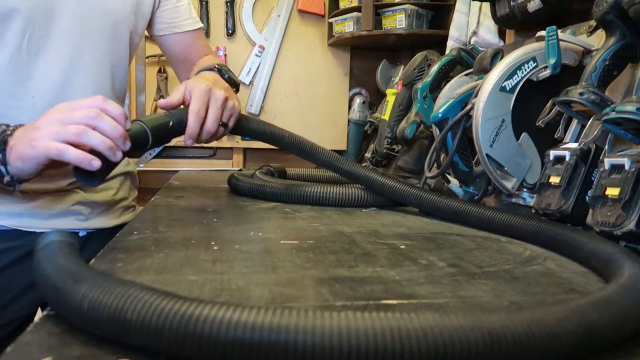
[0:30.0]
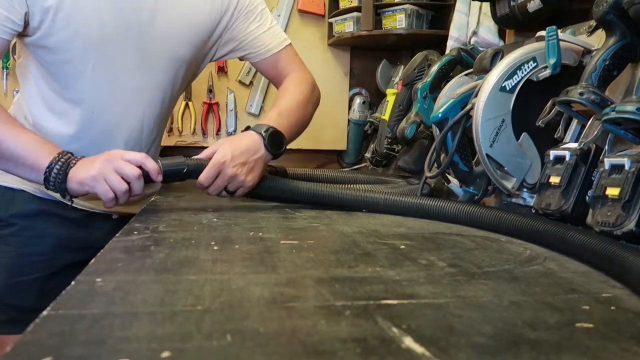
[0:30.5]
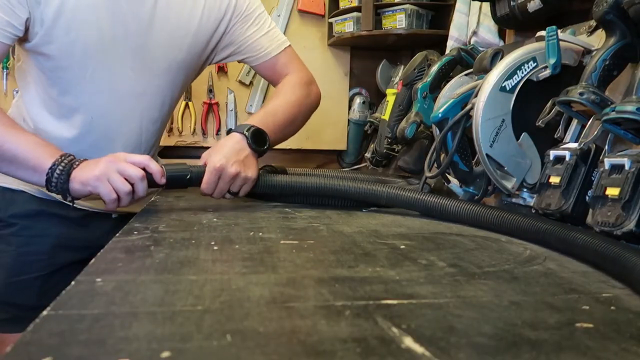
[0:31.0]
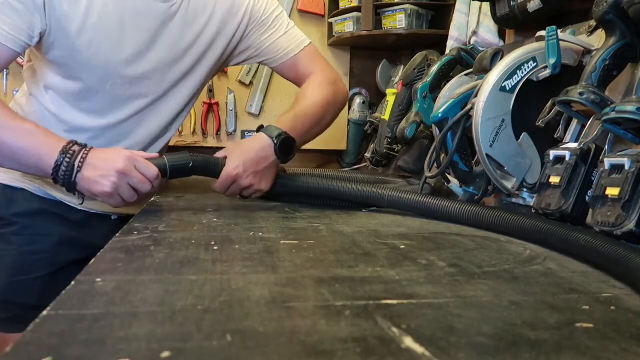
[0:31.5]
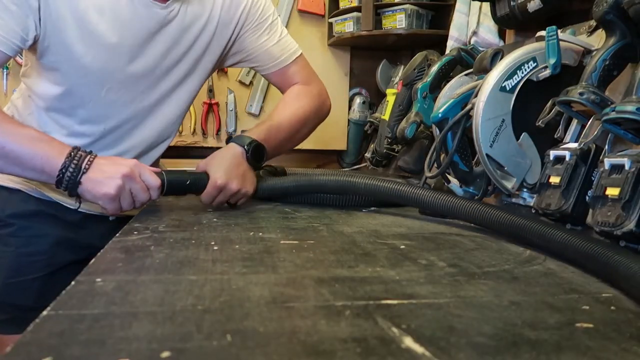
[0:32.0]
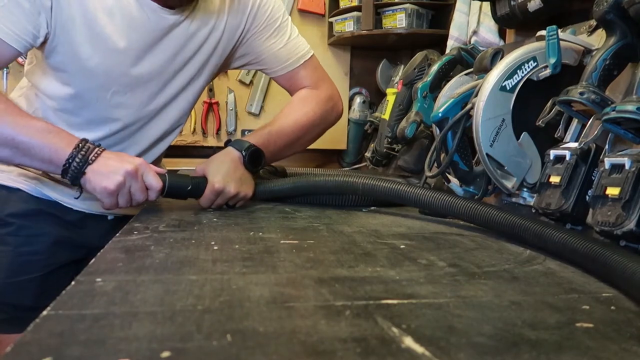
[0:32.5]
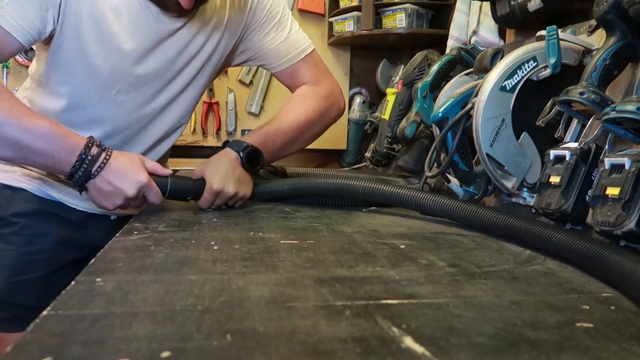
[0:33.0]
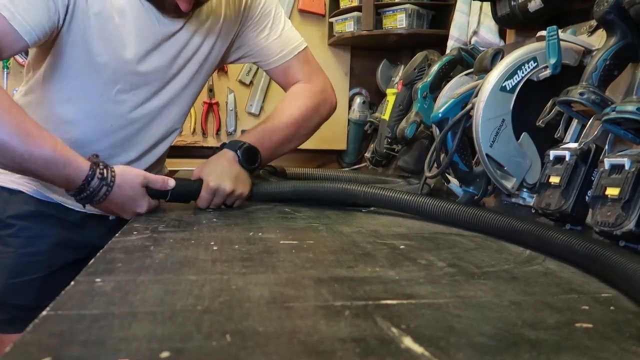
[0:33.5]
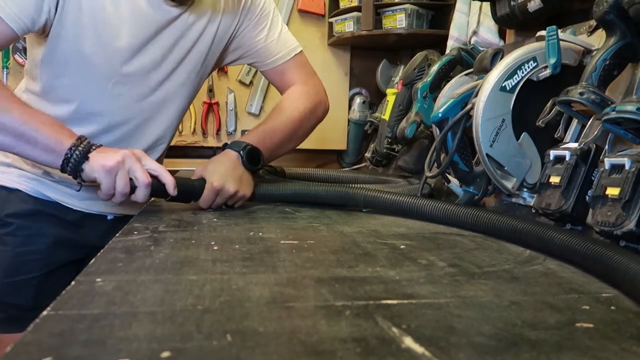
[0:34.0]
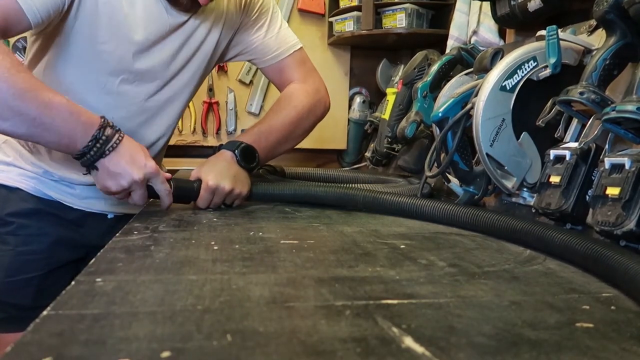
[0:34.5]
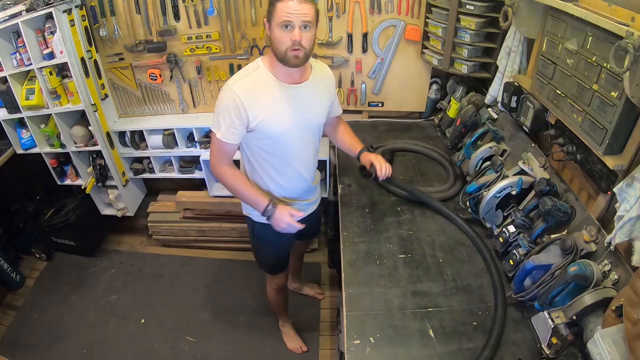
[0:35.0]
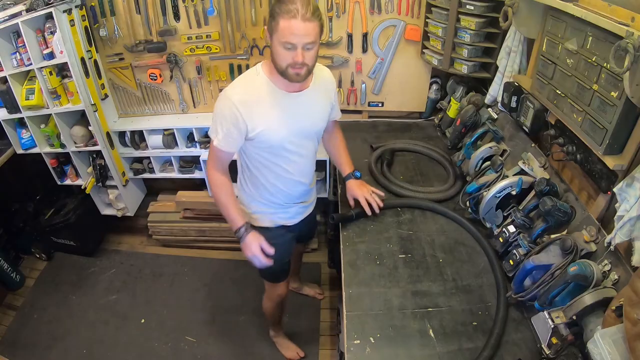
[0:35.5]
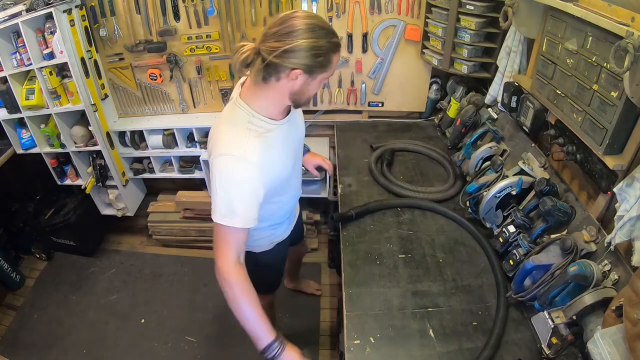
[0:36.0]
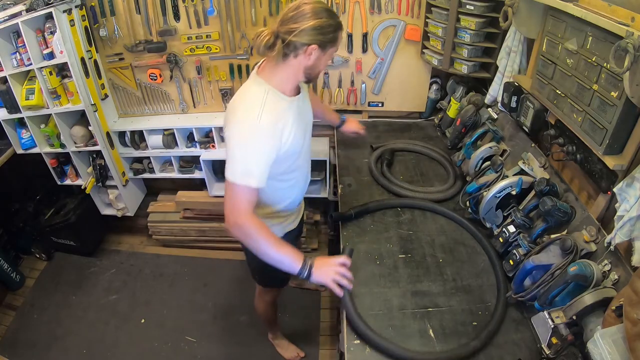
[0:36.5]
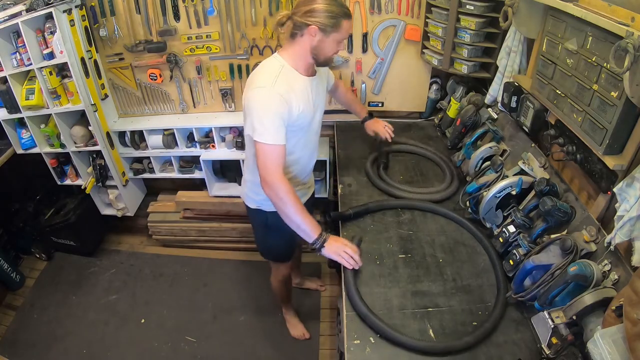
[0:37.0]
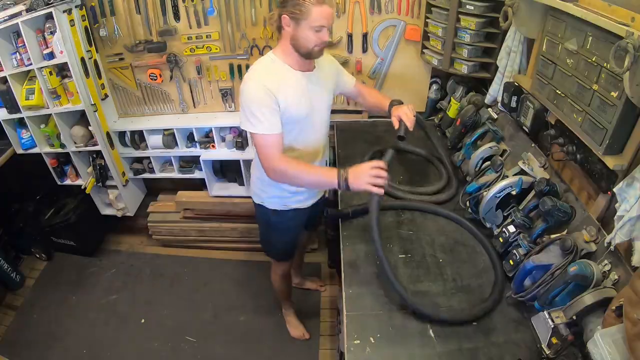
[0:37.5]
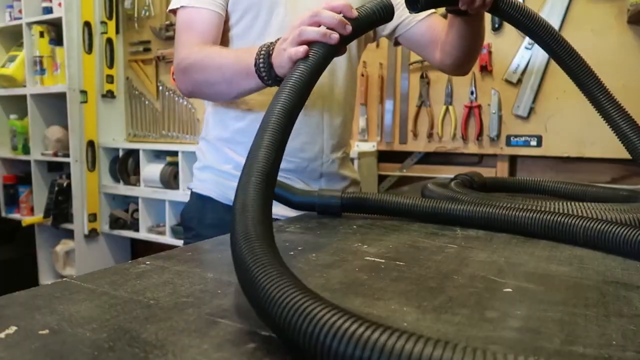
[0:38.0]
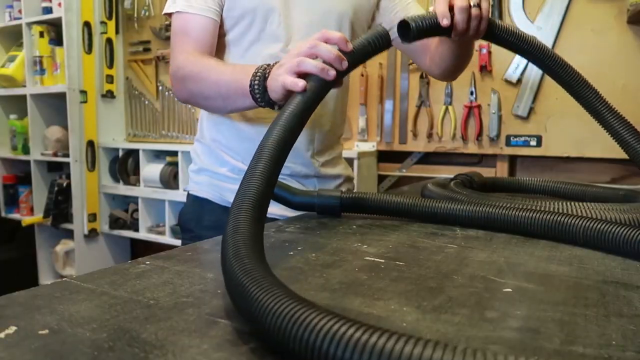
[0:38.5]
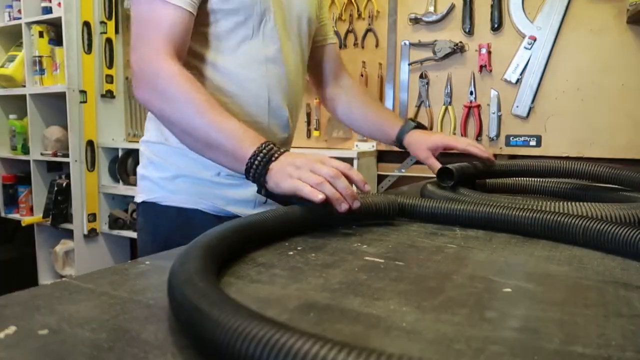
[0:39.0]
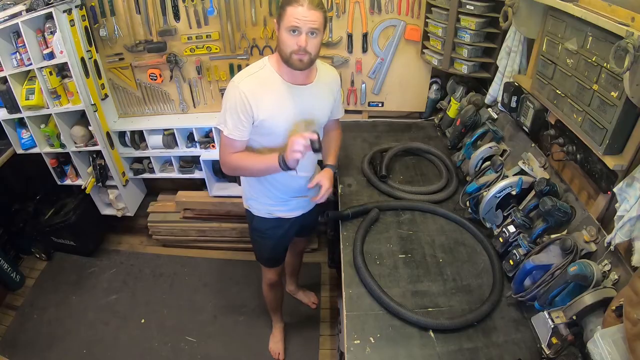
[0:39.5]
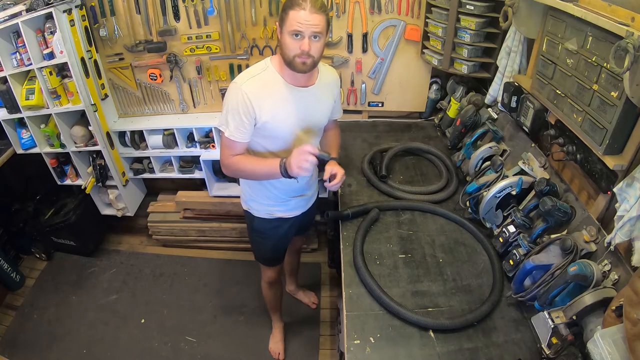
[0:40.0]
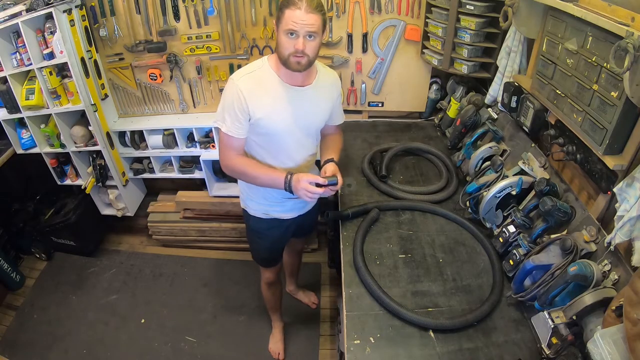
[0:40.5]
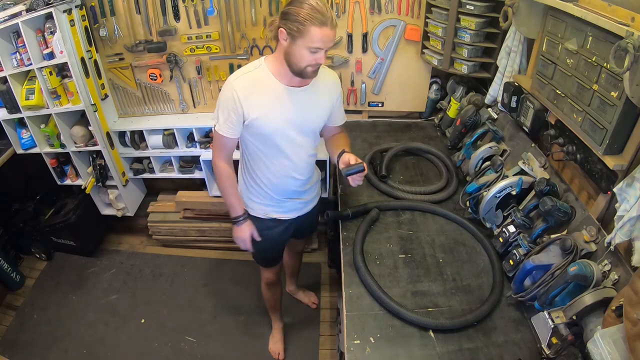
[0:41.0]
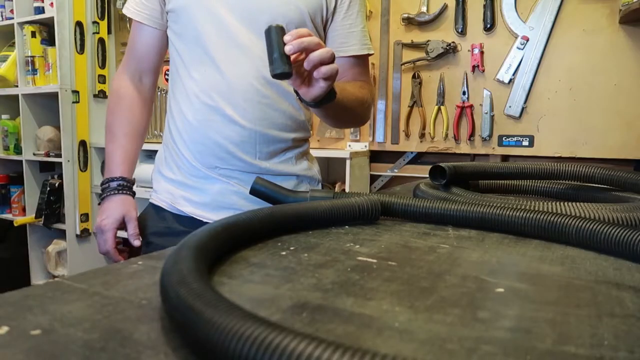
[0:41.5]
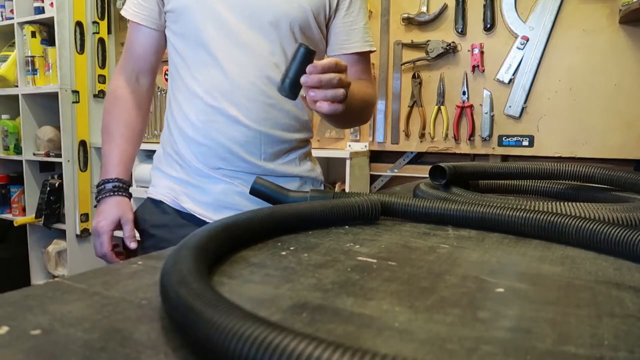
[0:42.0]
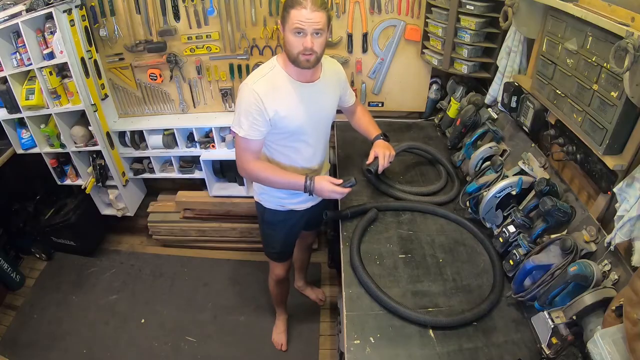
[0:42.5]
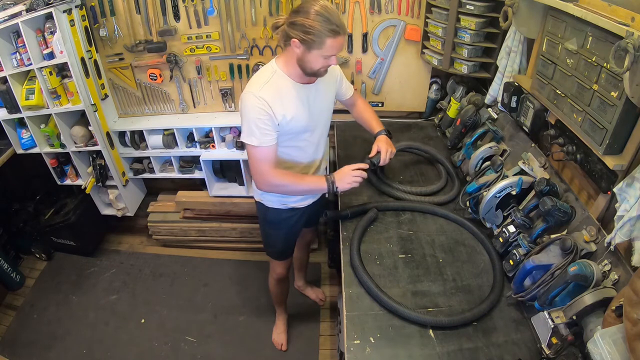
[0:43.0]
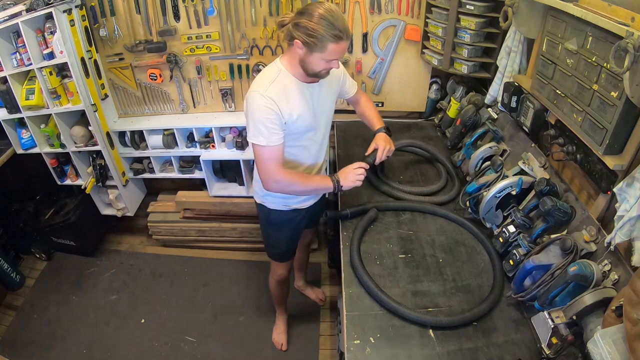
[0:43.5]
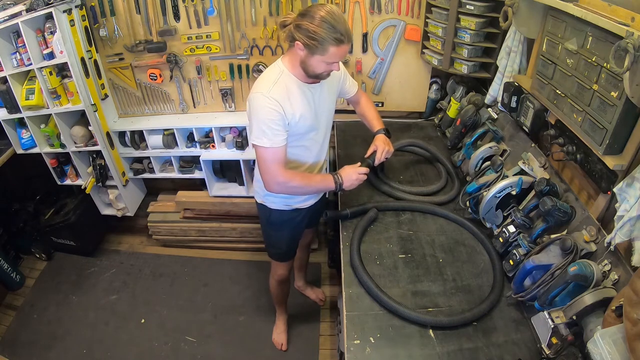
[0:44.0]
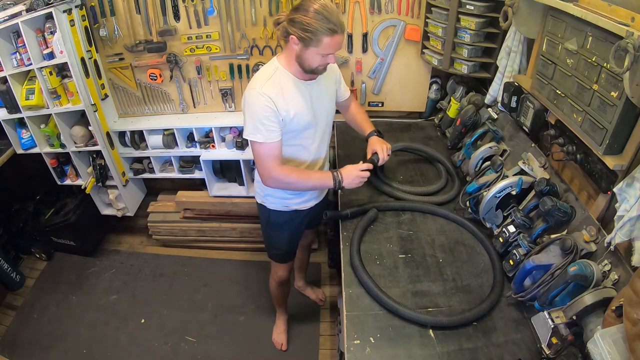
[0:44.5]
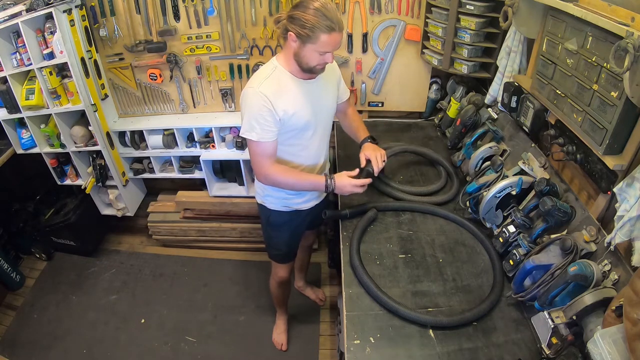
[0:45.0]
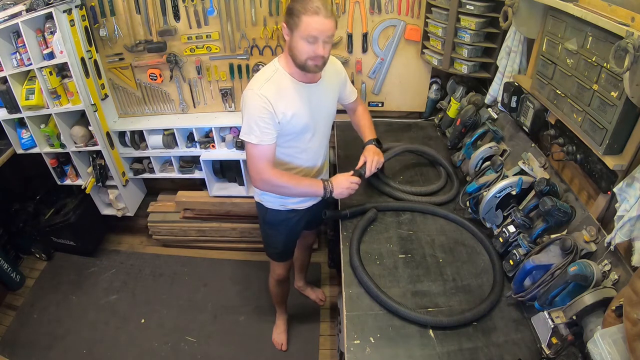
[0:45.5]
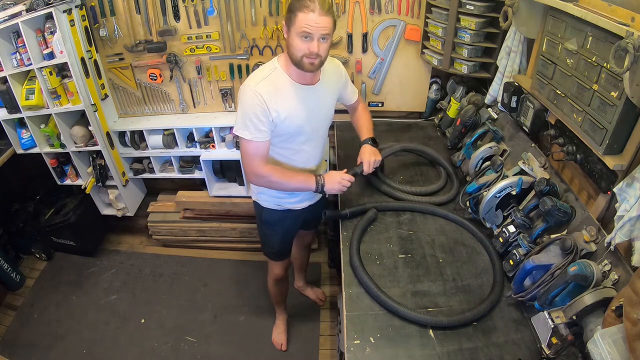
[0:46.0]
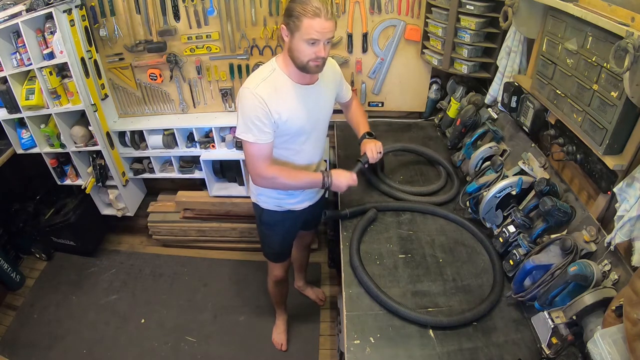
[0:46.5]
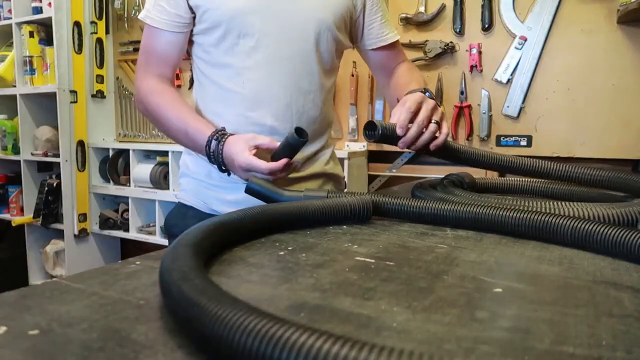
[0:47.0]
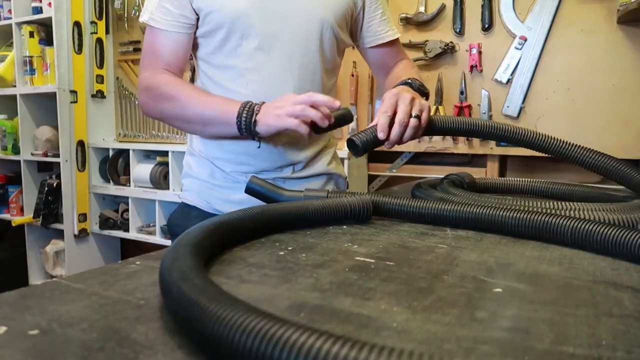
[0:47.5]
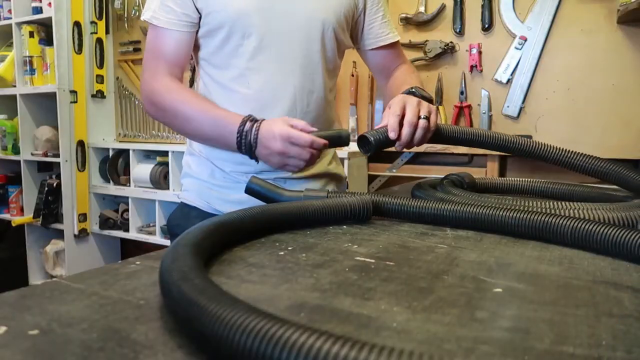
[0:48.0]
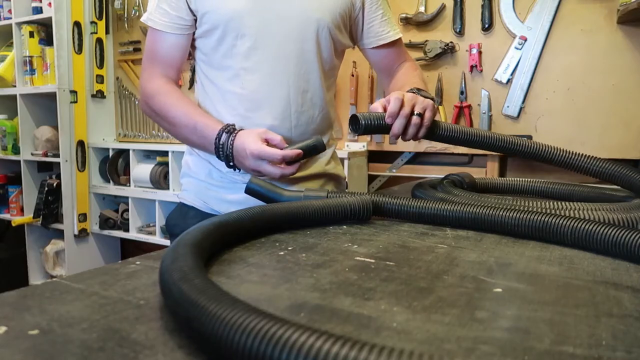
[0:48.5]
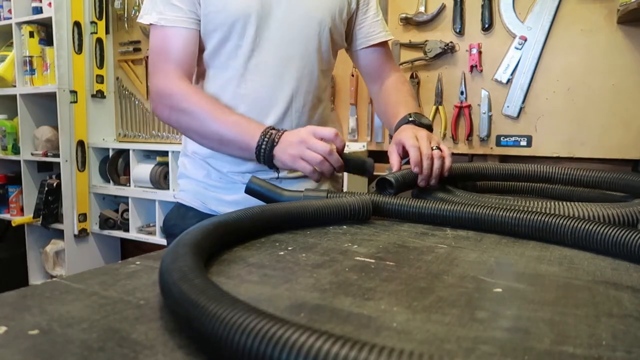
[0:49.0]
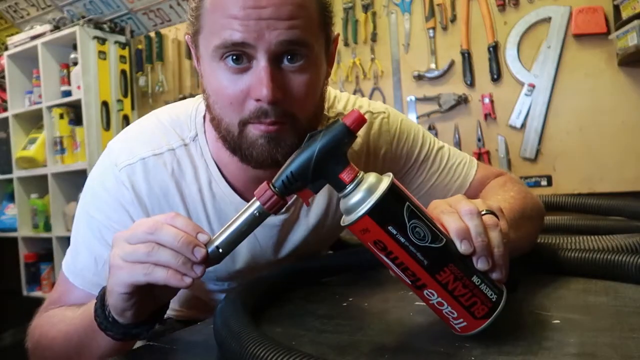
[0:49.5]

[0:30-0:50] The man fits the part on very tightly and screws it in so it does not come off. He then takes the ends of the left and right hoses and places them next to each other as if about to connect them. Looking at the camera, he appears to be holding another part, a black plastic part. He puts it on the left hose, takes it off again, and taps the hose a few times. He then shows another piece of equipment in front of the camera, a spray bottle that is something like a gas can: a Trade Flame Butane Blowtorch Kit.